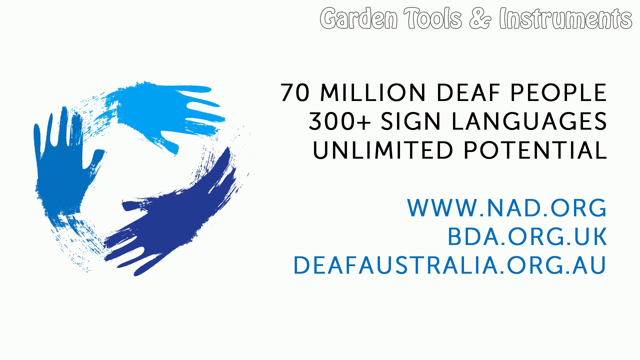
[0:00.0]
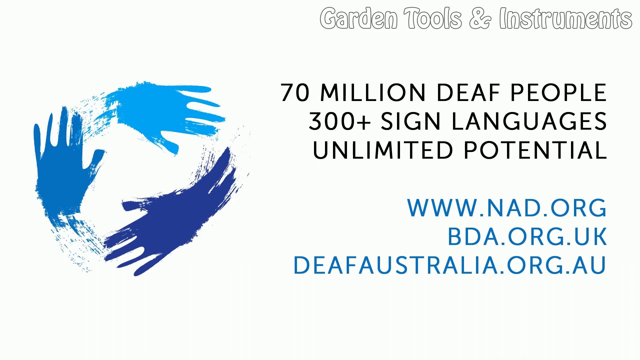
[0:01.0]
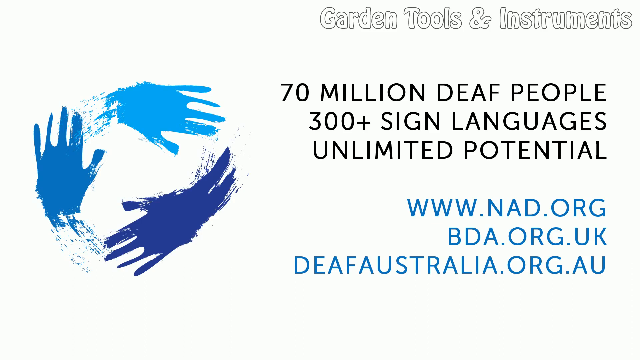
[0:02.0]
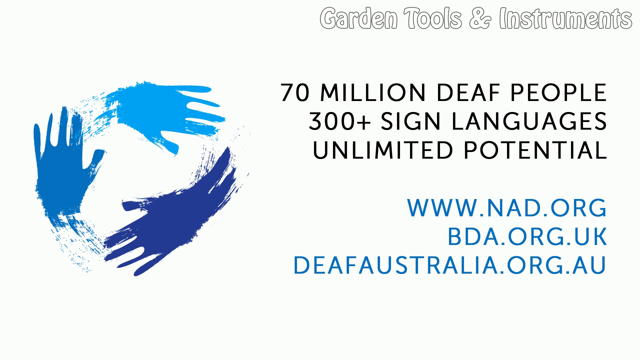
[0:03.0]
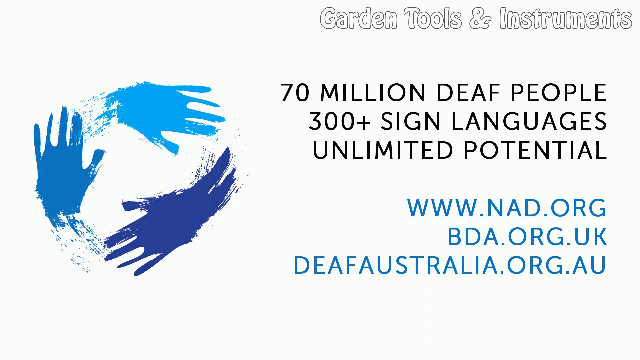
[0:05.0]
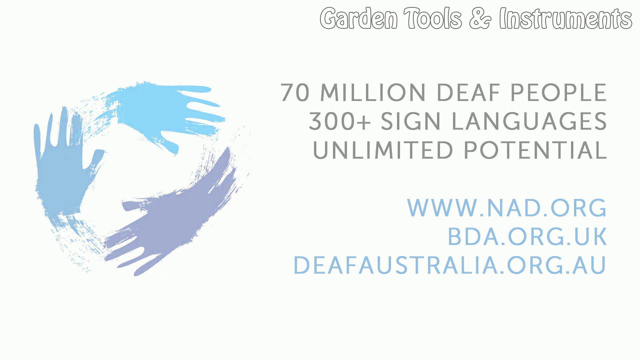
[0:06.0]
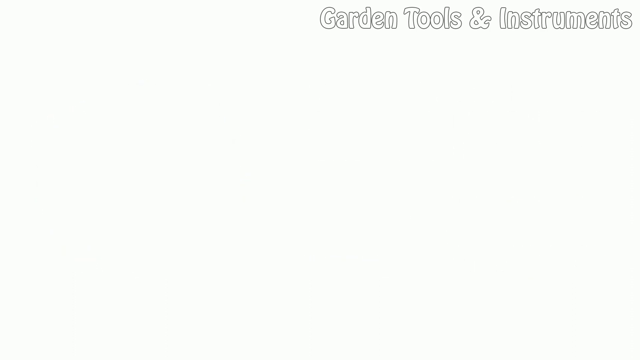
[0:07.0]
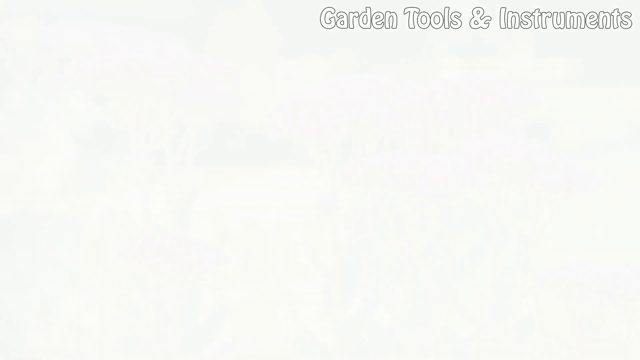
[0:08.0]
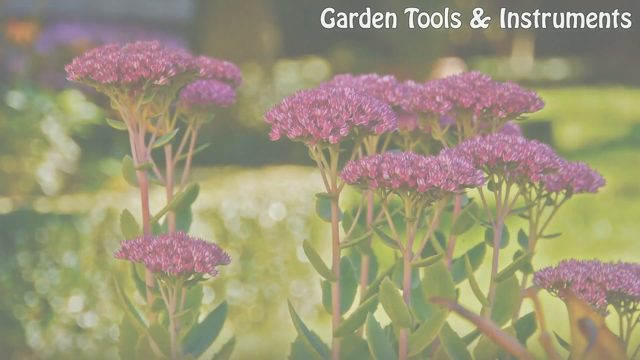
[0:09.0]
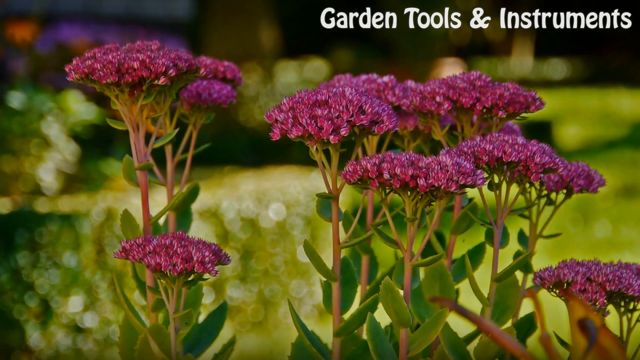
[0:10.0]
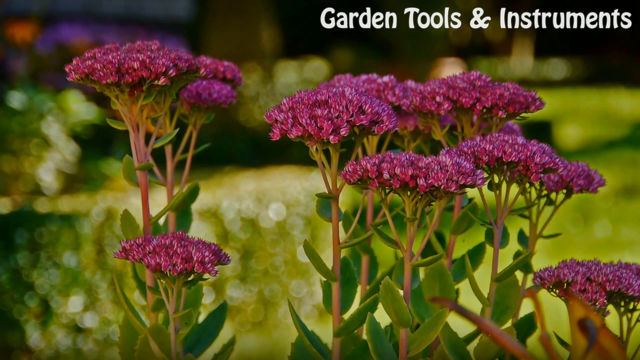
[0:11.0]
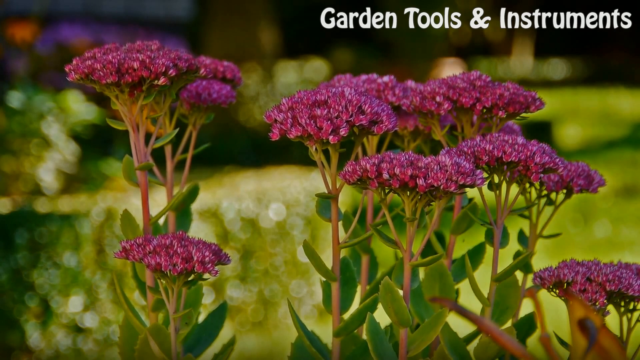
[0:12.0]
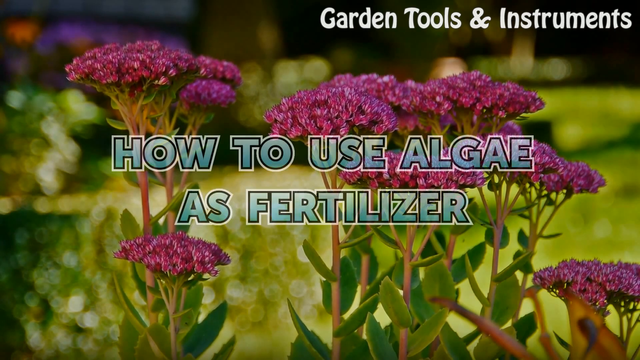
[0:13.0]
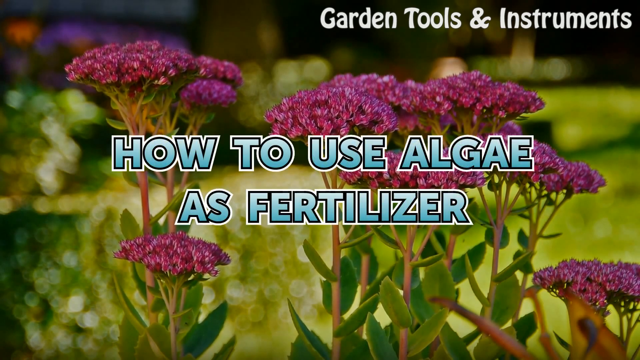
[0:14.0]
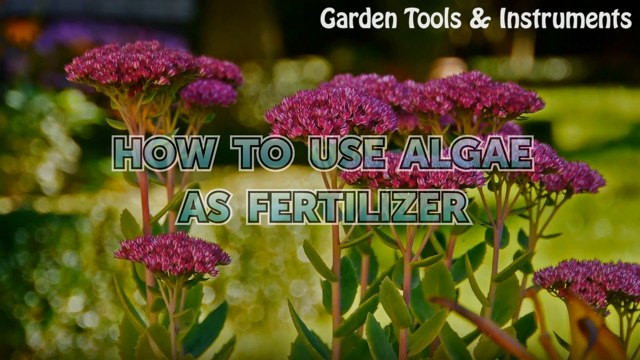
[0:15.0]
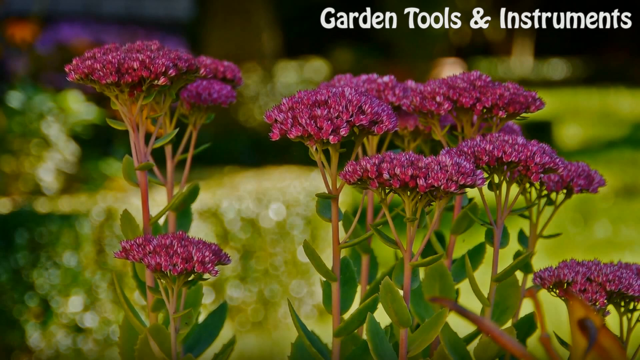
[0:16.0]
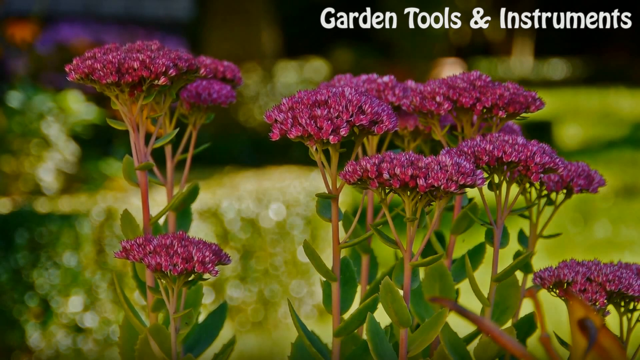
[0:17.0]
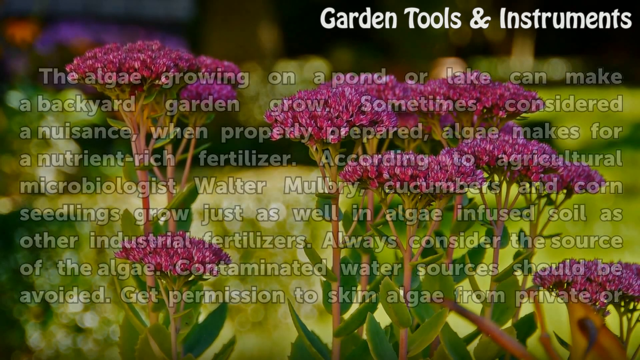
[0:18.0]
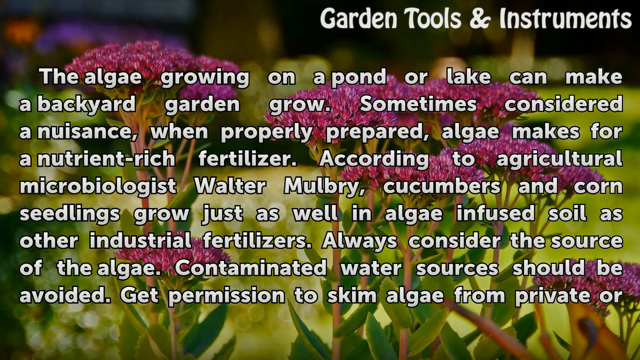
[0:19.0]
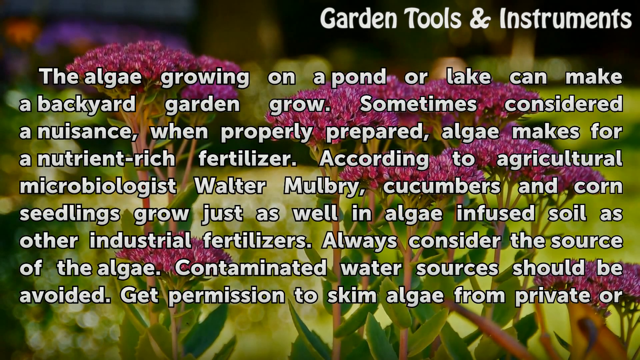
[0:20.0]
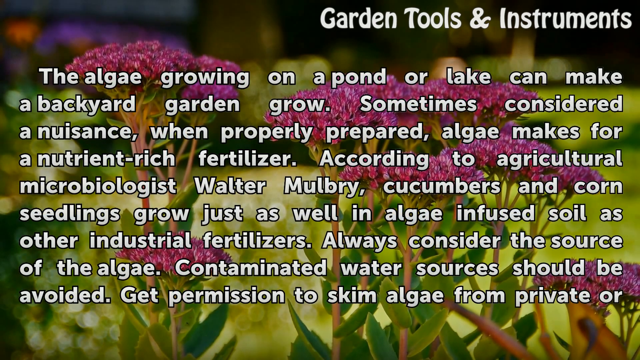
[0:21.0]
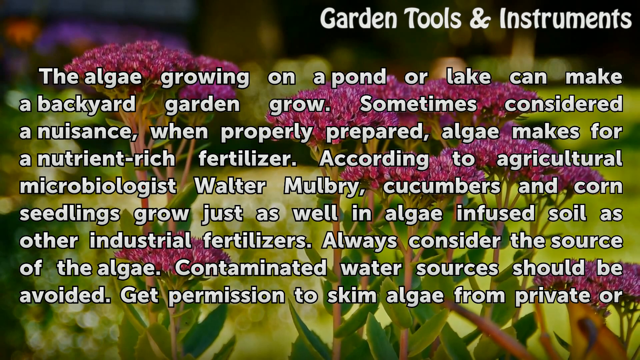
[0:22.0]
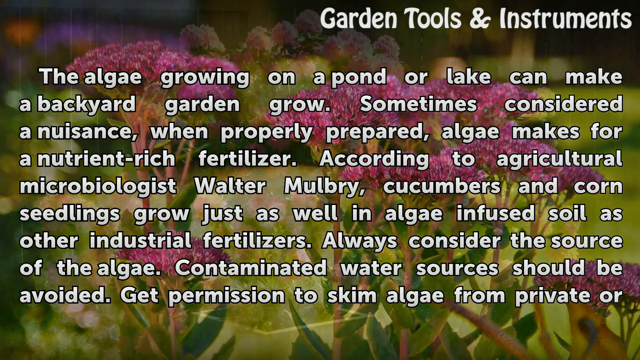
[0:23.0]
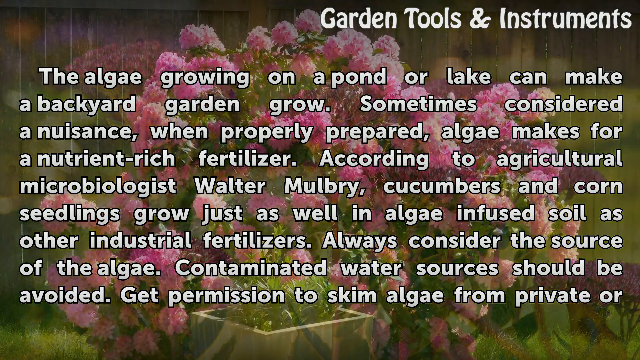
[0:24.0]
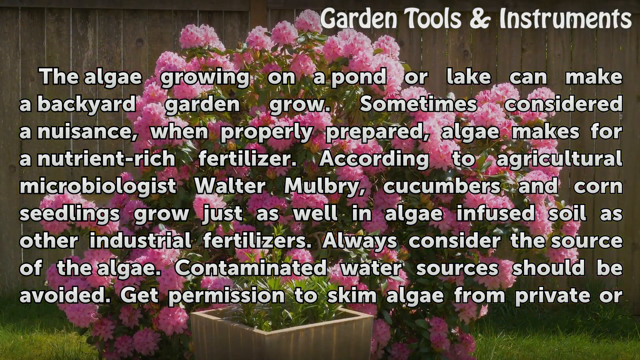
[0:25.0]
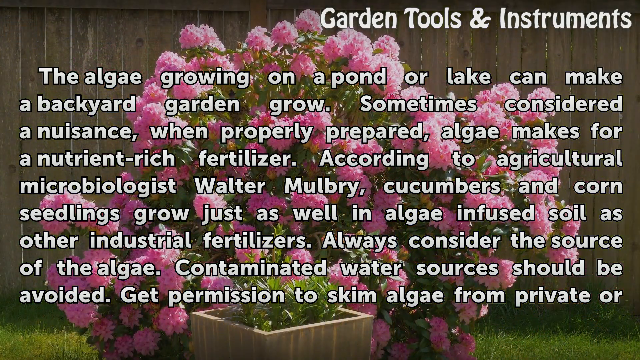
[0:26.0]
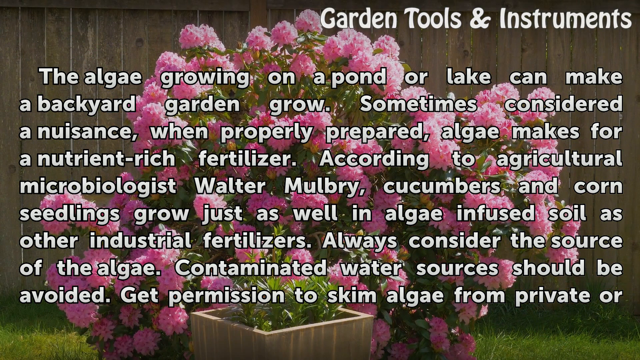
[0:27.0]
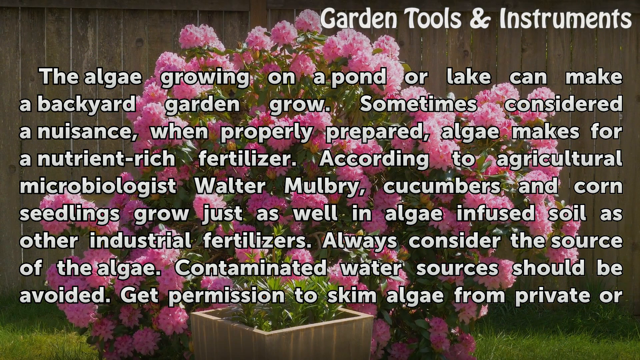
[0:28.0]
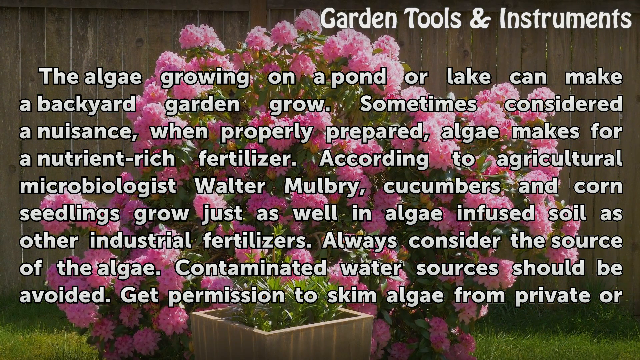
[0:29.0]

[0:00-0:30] The video opens with a picture of some small red flowers, perhaps somewhat weedy ones. Text about using algae in the garden appears, including "how to use algae as a fertilizer" and "garden tools and instruments". The text reads "The algae grown on a pond or lake can make a backyard garden grow, sometimes consider a nuisance. When properly prepared, algae makes for nutrient-rich fertilizers" and cites agricultural microbiologists. It also says "Always consider the source of the algae. Contaminated water sources should be avoided," and mentions getting permission to skim algae from a private lake.